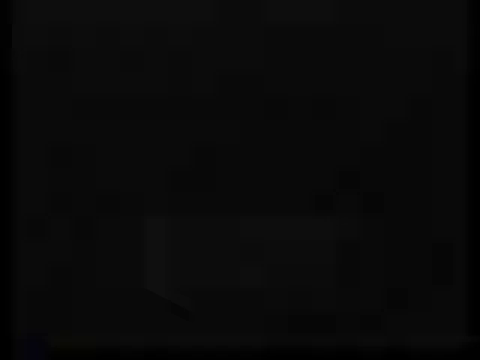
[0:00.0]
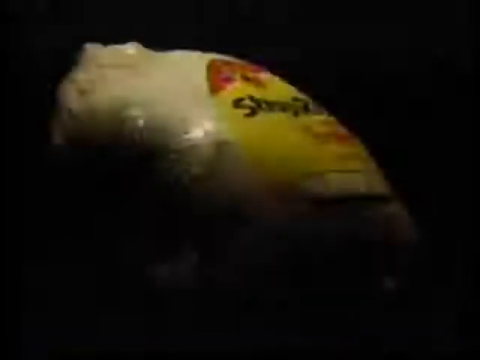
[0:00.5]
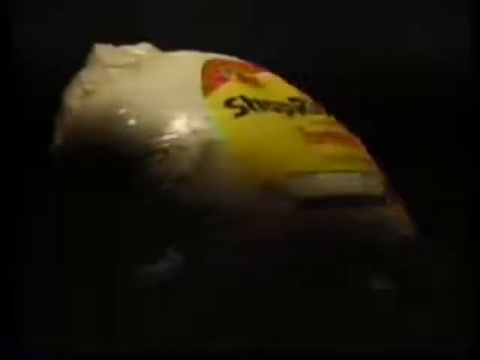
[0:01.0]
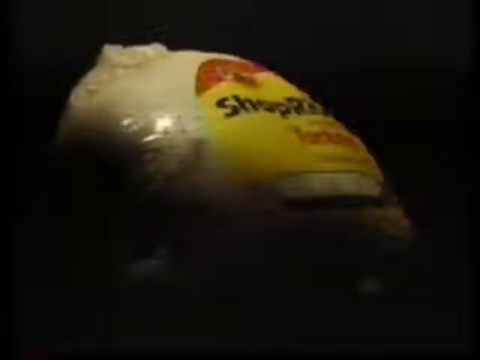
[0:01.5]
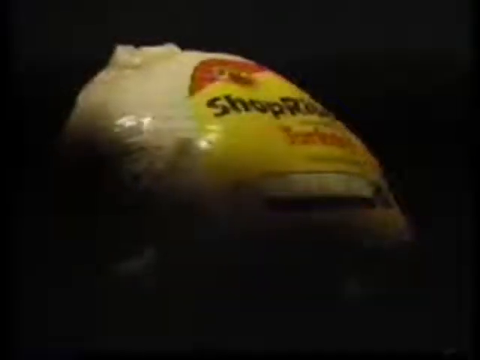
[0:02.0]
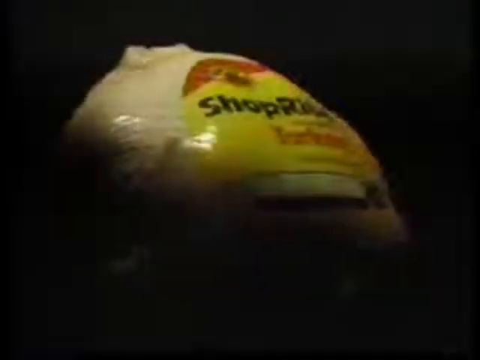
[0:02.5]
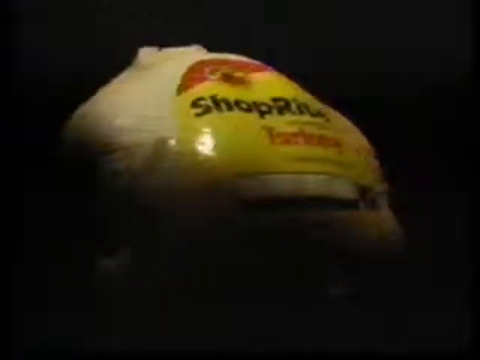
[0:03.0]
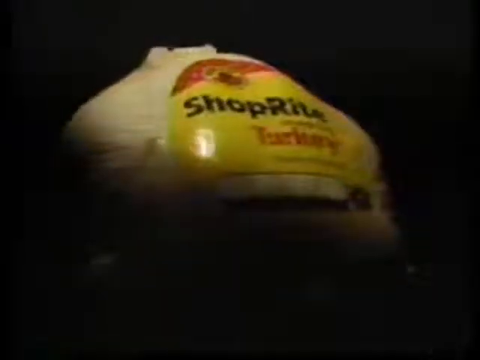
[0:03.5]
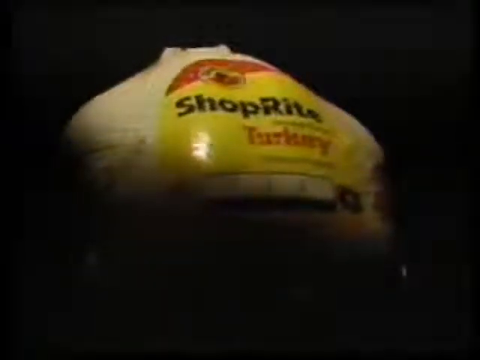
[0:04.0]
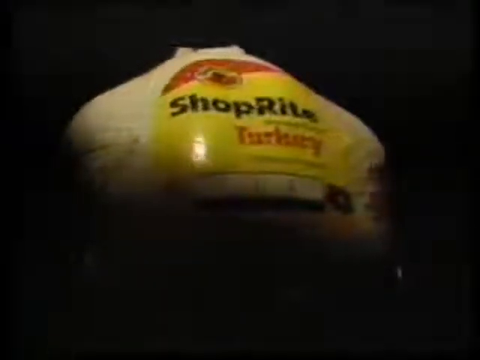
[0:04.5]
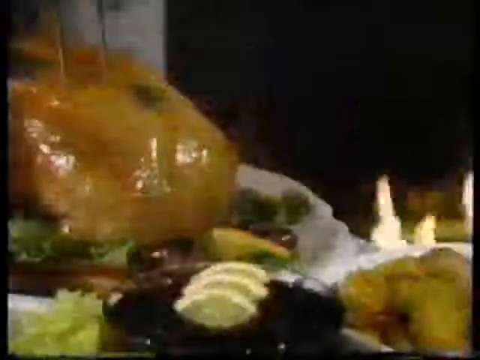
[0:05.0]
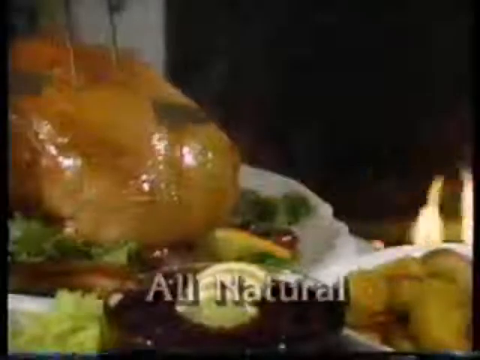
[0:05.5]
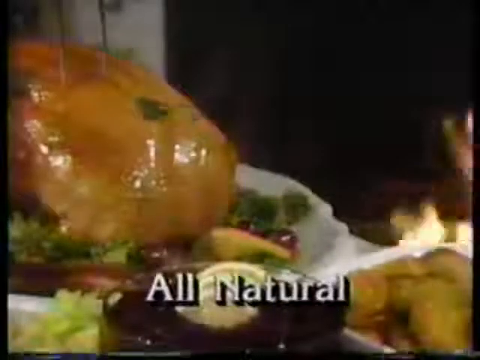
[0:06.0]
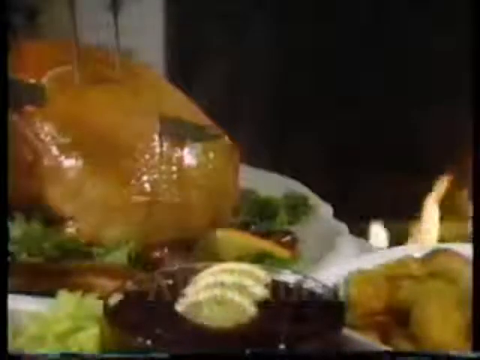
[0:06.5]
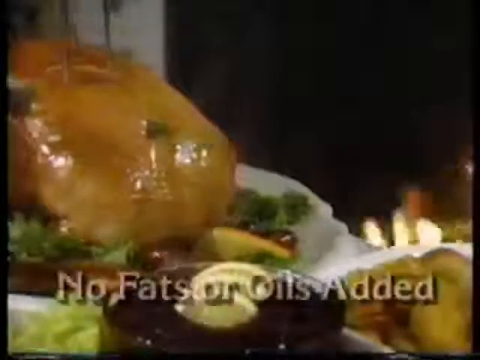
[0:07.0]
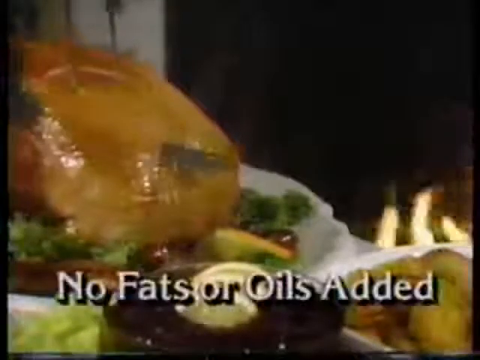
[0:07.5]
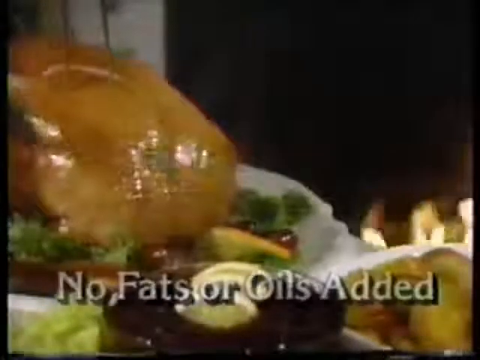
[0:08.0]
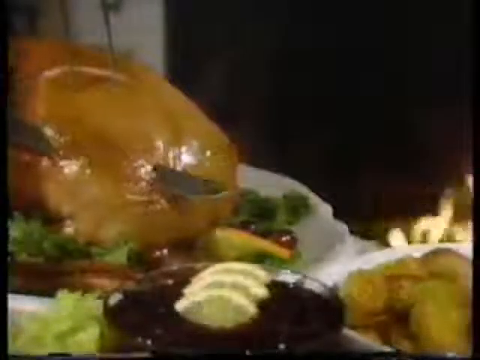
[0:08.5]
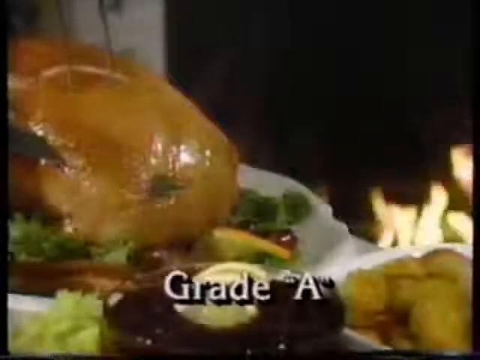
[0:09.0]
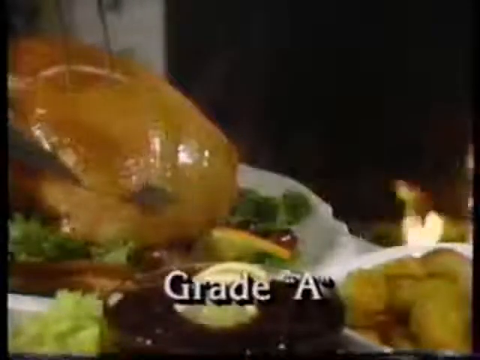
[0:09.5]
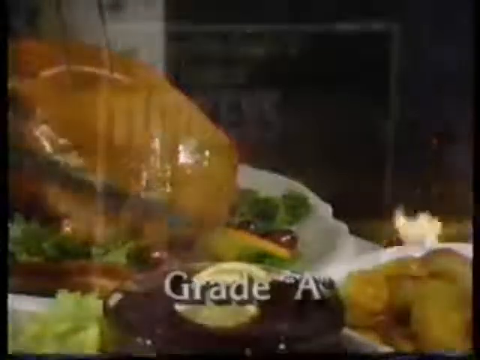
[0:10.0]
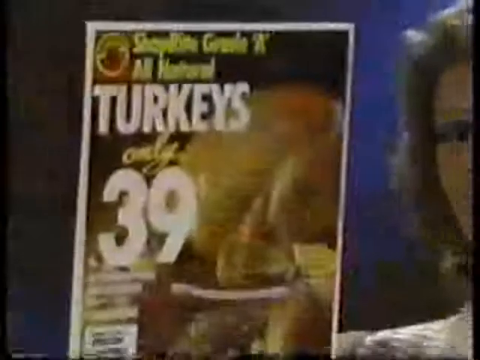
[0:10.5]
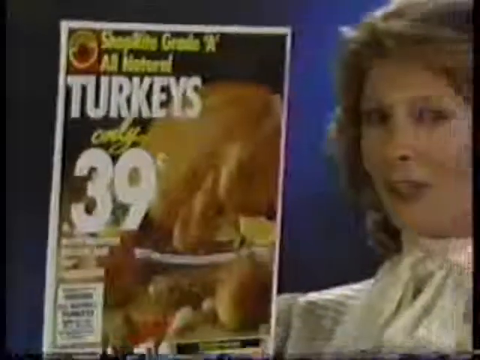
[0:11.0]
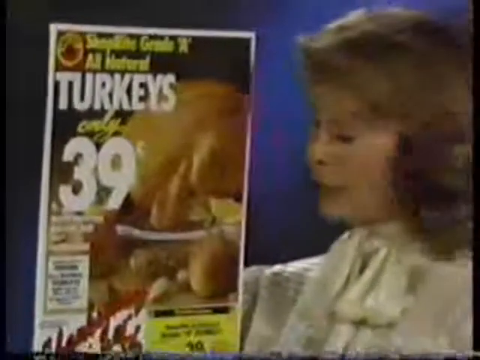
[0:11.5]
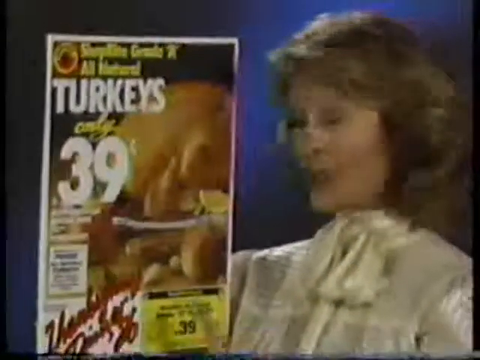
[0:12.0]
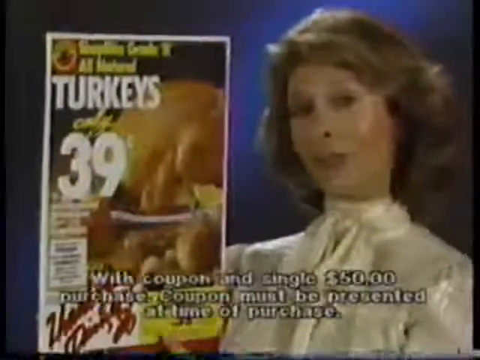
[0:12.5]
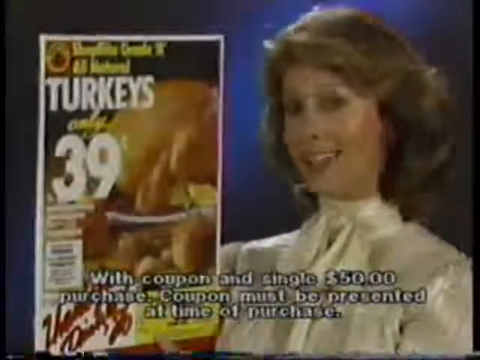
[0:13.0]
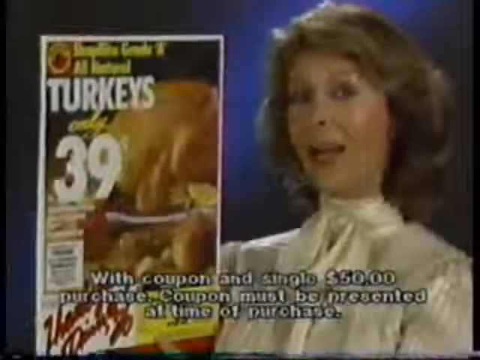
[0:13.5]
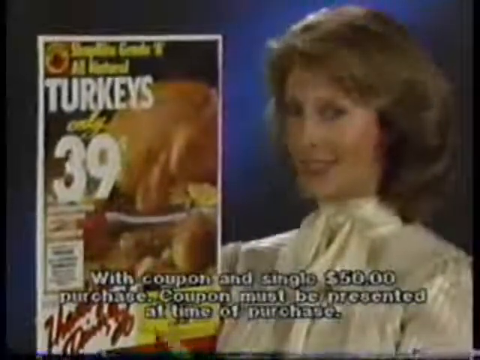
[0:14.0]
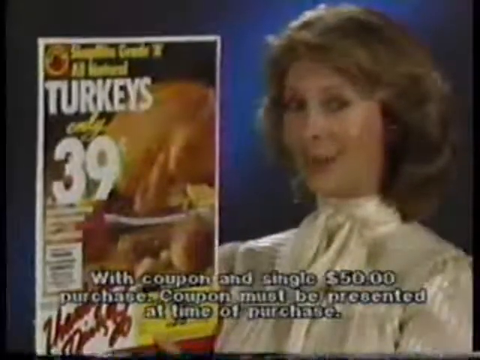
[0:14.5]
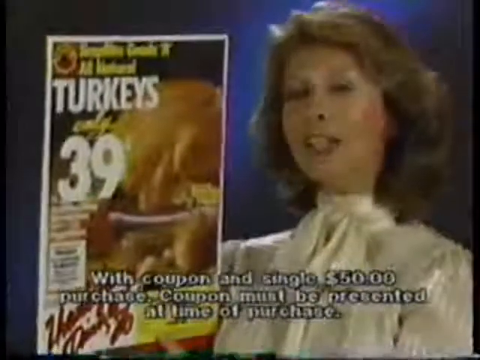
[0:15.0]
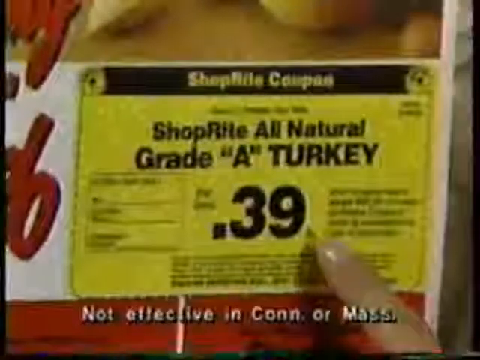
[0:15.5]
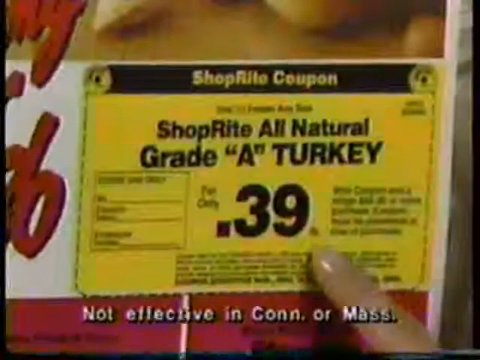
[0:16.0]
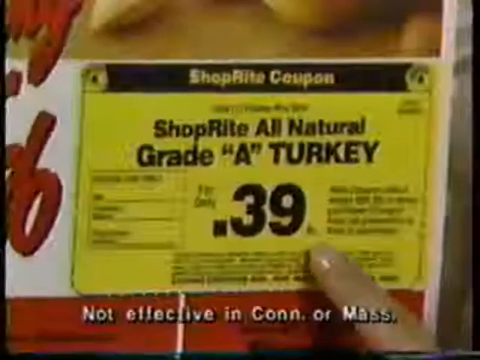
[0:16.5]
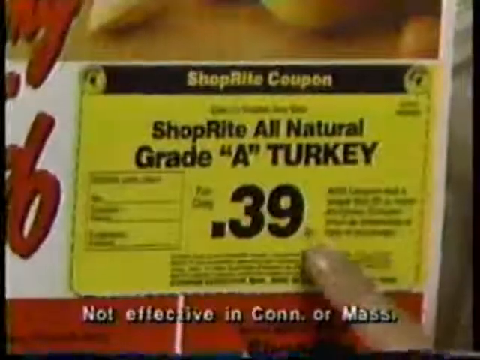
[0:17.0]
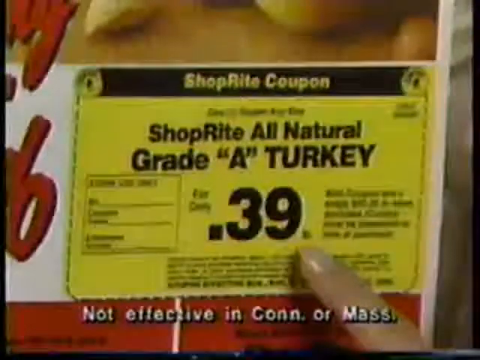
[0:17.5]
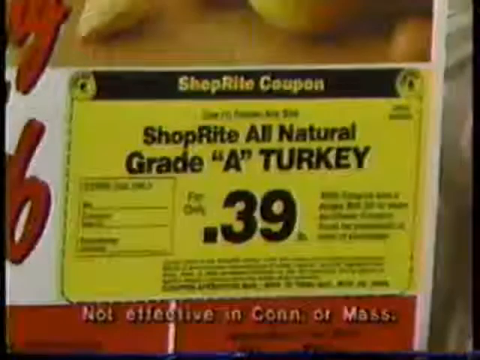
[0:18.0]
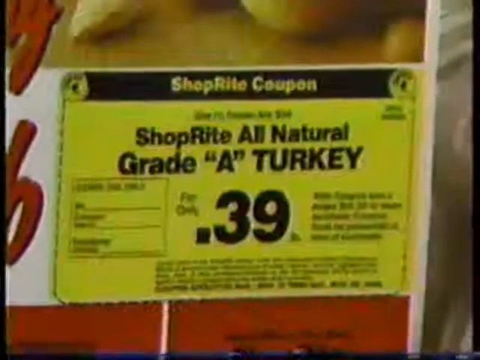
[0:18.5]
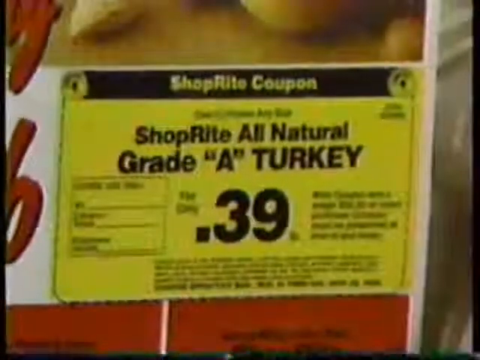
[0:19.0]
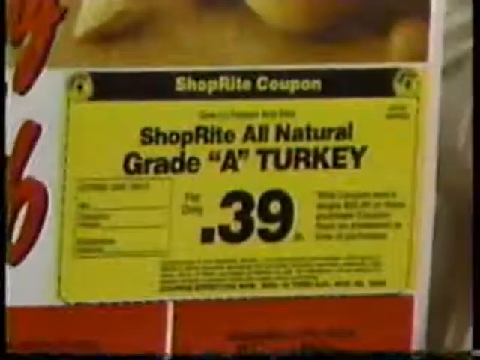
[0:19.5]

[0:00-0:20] Against a solid black background, a large image unfolds. It starts as what looks like just a cream-colored, somewhat rounded triangular shape, then turns to reveal a plastic-wrapped, packaged turkey breast. Light hits somewhat from above, shining on the top of the package, which is shaped like a turkey breast. The ShopRite logo, in red and black, is in the upper left corner of the package. A small section of the turkey breast package on top is red, and it is primarily yellow below. Bold black text reads "ShopRite." The scene then reveals what looks like a fancy dinner: the turkey breast, now golden brown, is on the left with a variety of foods surrounding it, and a knife comes from the upper left corner, slicing through it.